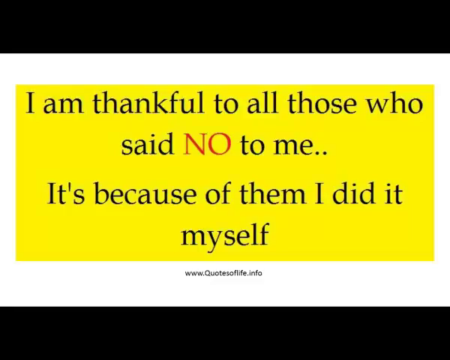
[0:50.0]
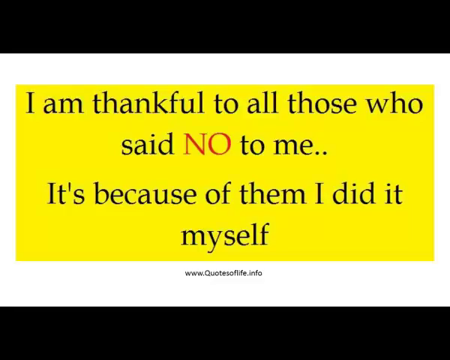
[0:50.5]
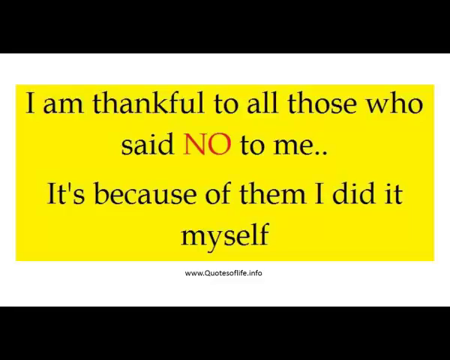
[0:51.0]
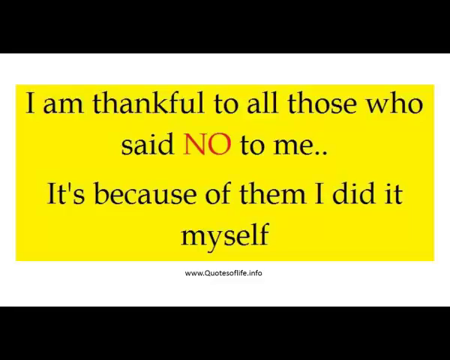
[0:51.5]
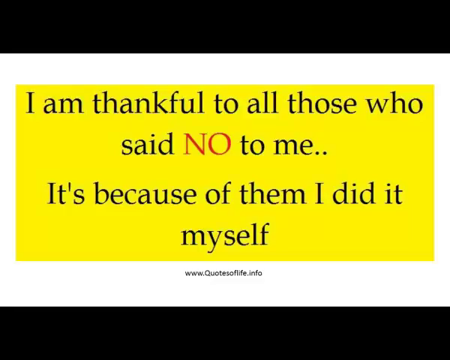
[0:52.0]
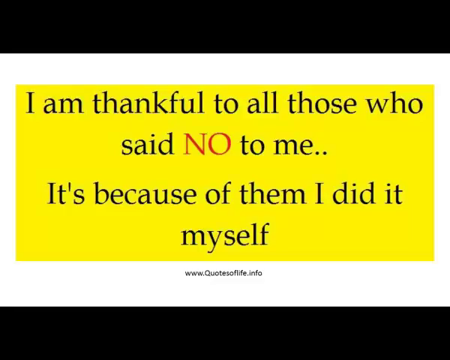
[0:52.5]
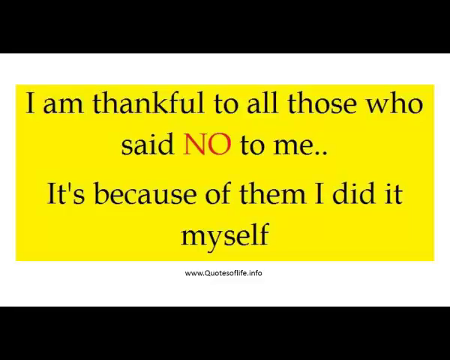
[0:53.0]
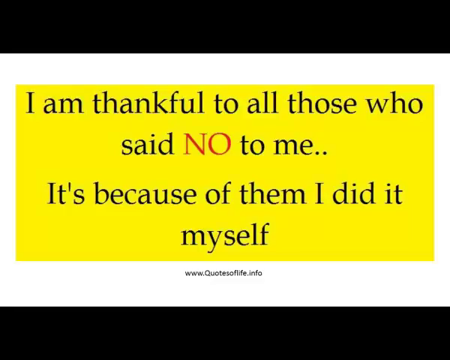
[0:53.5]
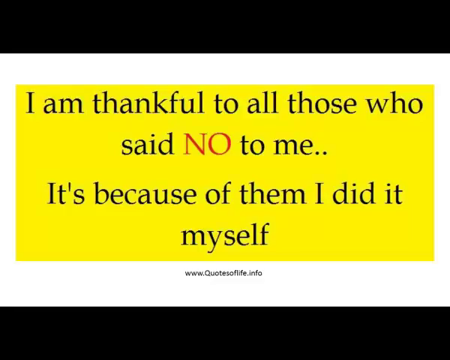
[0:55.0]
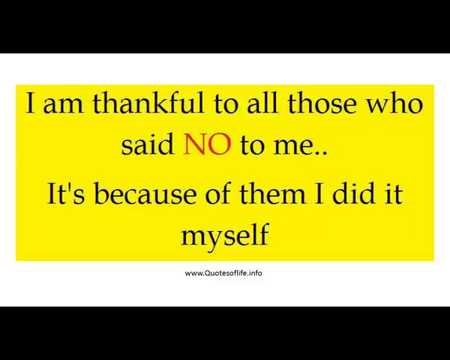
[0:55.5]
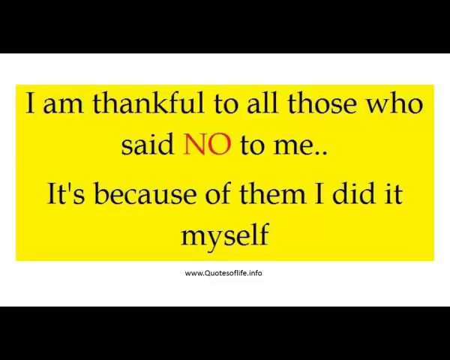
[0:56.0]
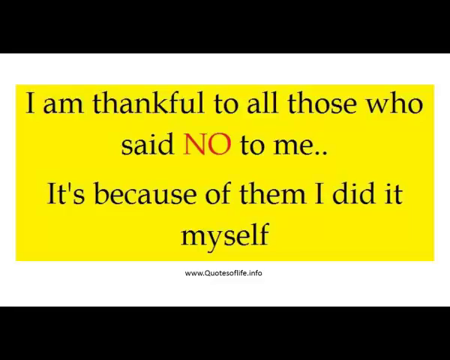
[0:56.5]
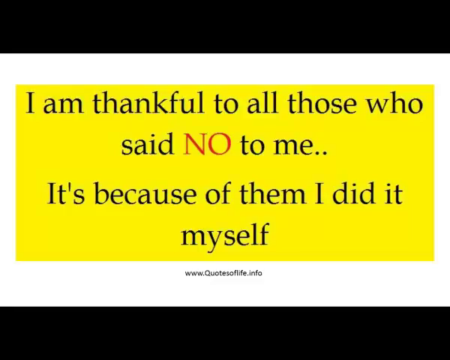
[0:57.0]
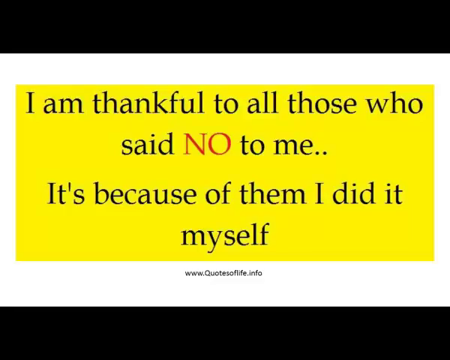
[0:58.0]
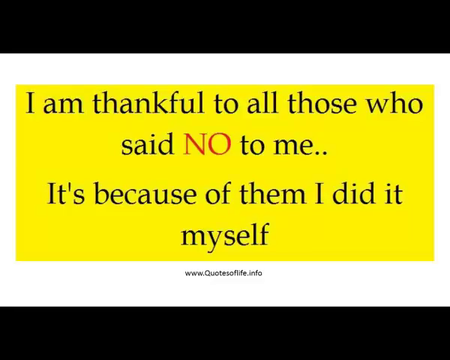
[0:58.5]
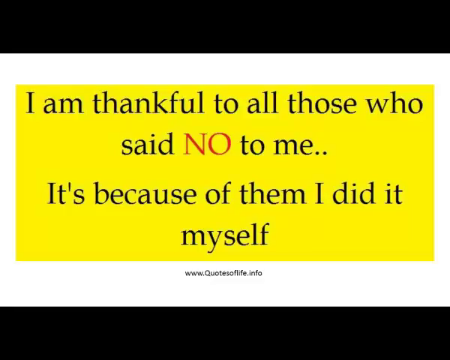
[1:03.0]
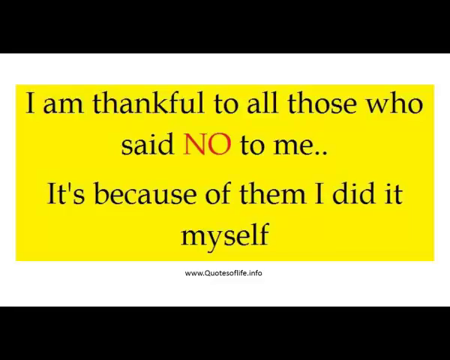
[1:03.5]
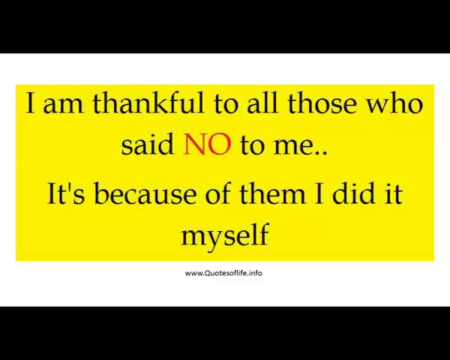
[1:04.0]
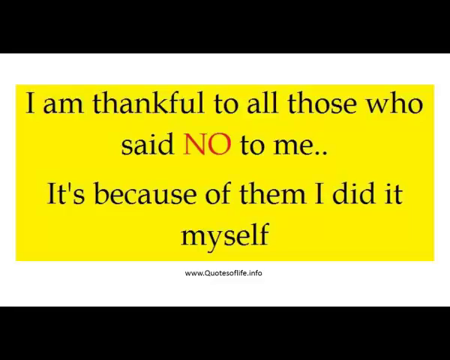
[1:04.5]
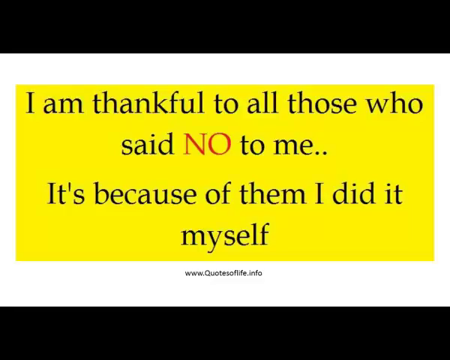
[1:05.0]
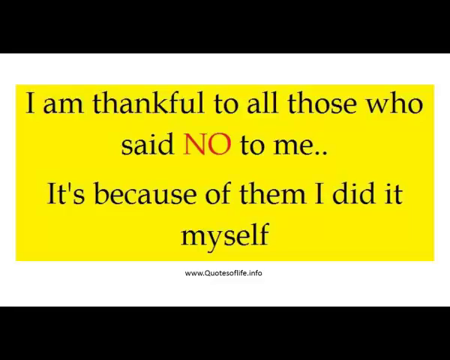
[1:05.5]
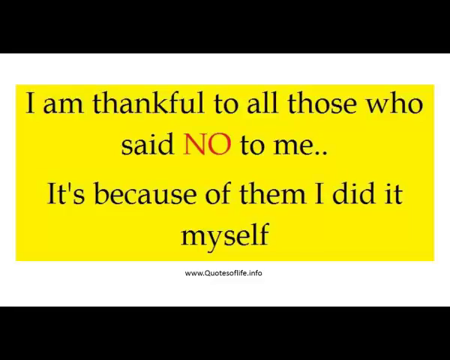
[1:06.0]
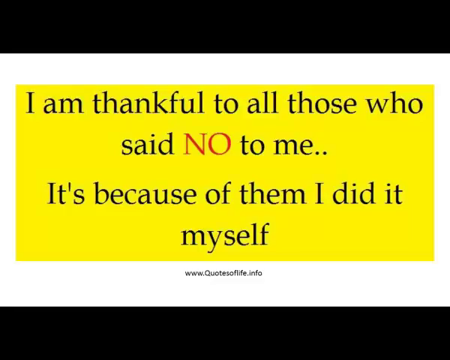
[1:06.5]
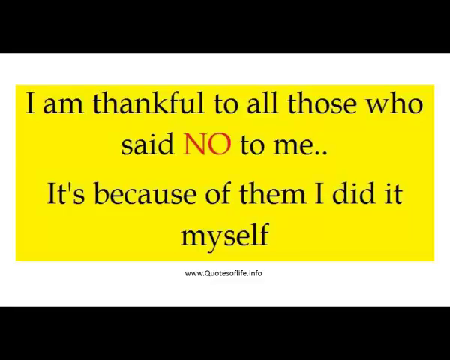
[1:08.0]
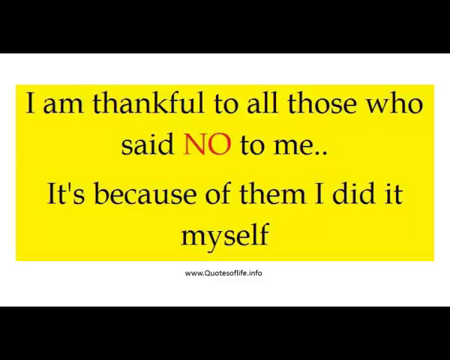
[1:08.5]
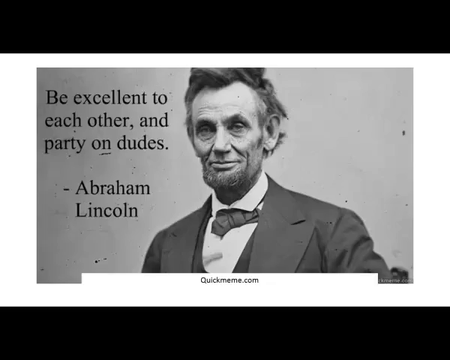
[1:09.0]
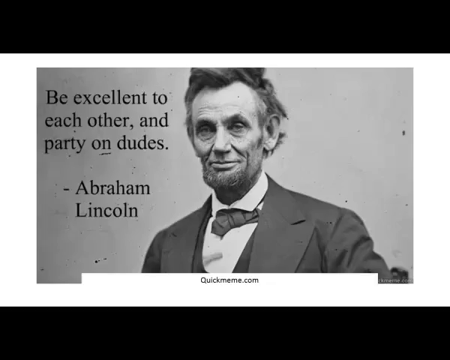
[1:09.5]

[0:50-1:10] Each slide has a black frame with a white background inside it. The quote slide reads "I am thankful to all those who said no to me.. It's because of them I did it myself." The word "no" is capitalized and in red letters, while the rest is in black, and two dots like an ellipsis follow "said no to me." Underneath is "www.quotesoflife.info." The next slide shows an old black-and-white picture of Abraham Lincoln wearing a suit with a kind of messed-up tie and a slight smile on his face. A quote on it reads "be excellent to each other, and party on, dudes," followed beneath by a dash and the name "Abraham Lincoln." At the bottom is another link reading "quickmeme.com."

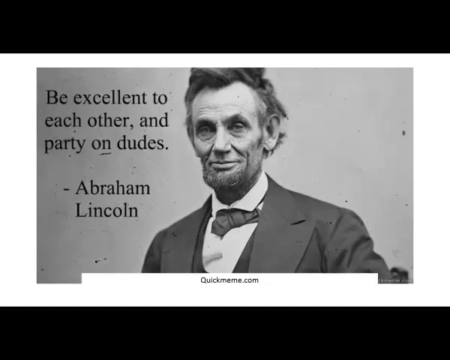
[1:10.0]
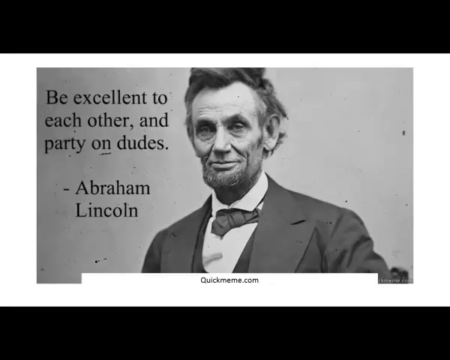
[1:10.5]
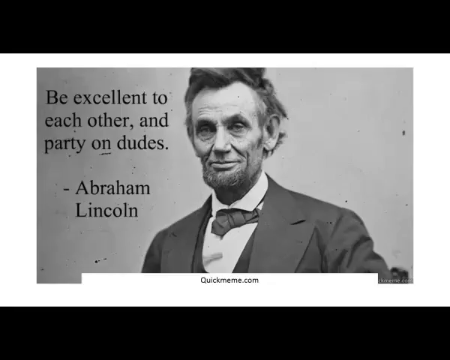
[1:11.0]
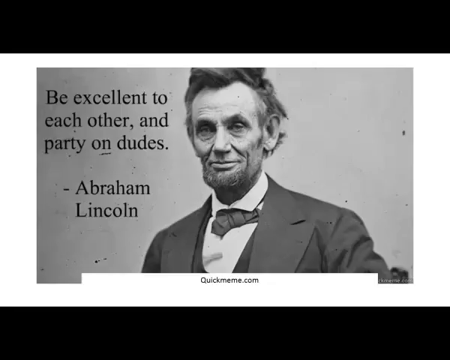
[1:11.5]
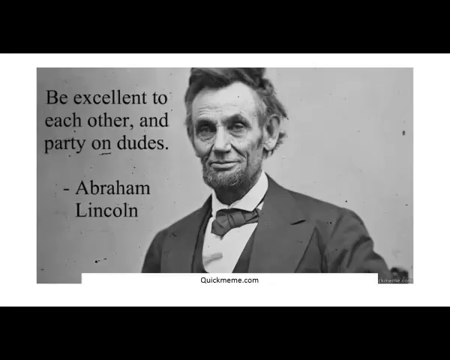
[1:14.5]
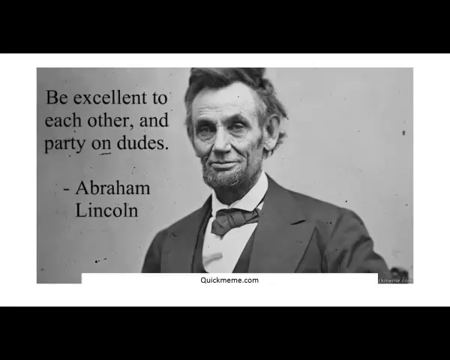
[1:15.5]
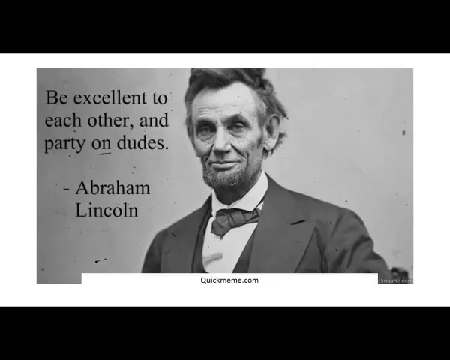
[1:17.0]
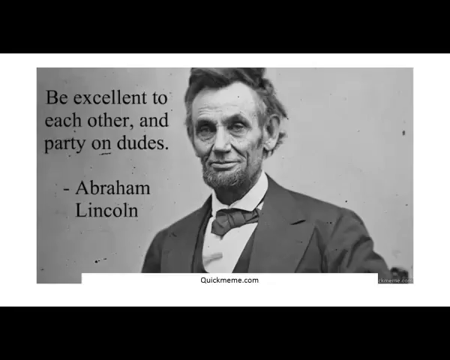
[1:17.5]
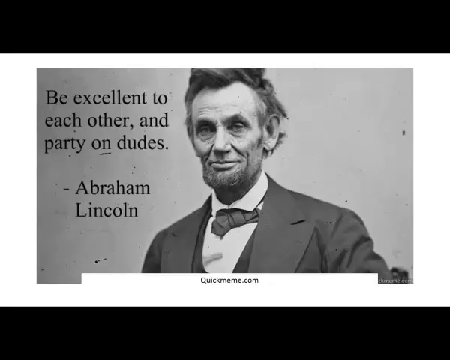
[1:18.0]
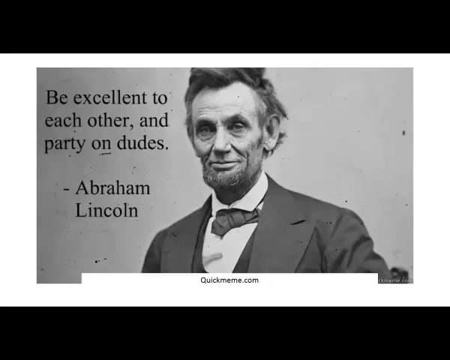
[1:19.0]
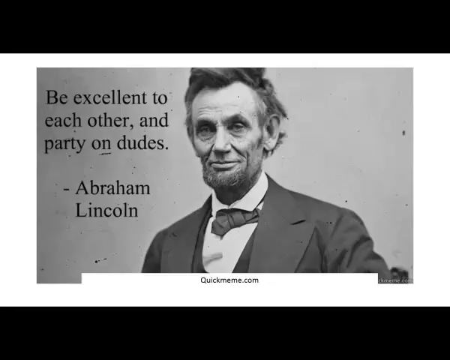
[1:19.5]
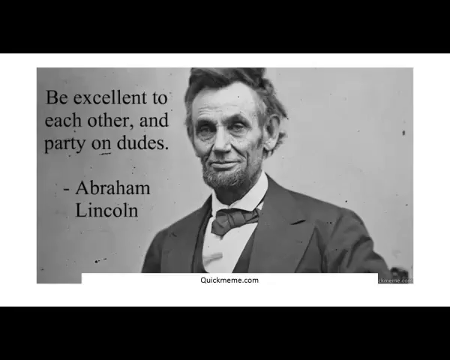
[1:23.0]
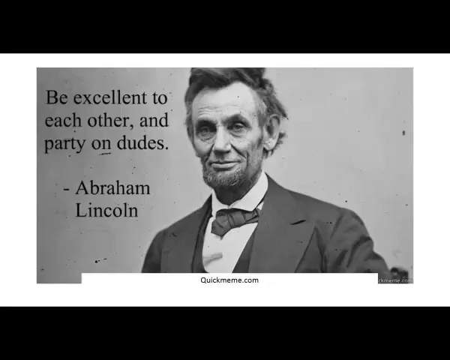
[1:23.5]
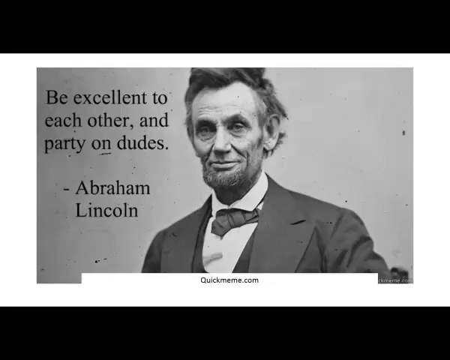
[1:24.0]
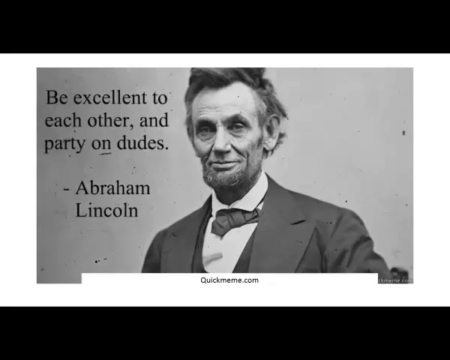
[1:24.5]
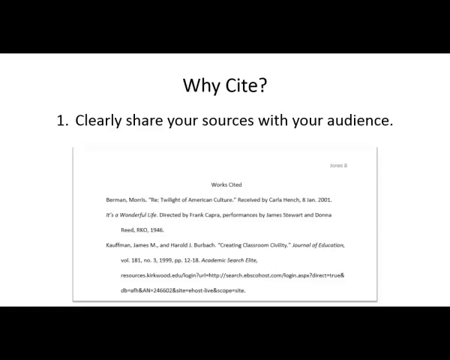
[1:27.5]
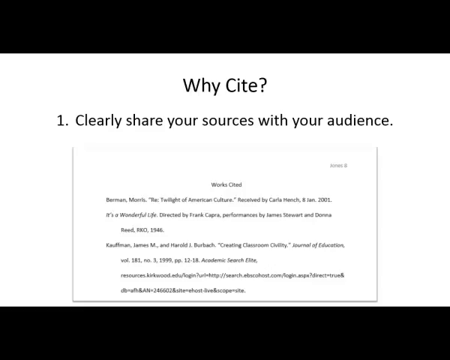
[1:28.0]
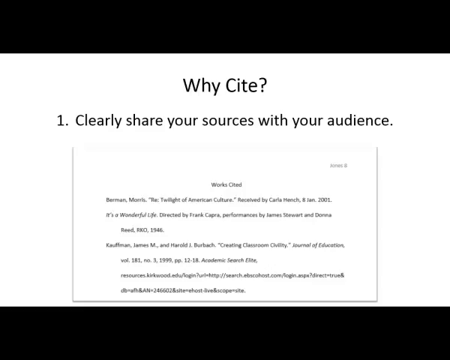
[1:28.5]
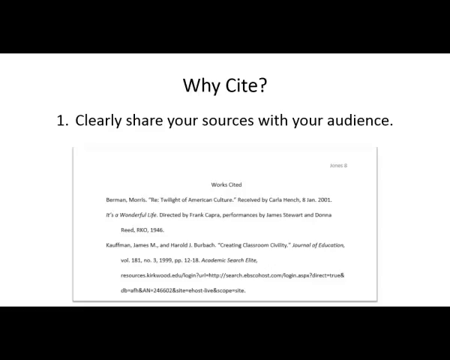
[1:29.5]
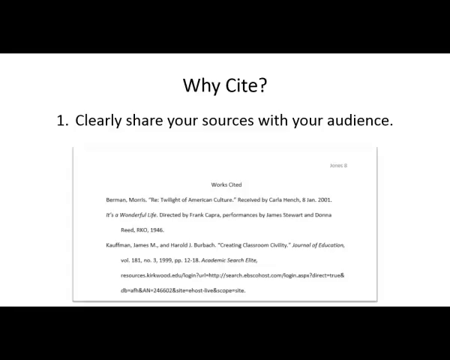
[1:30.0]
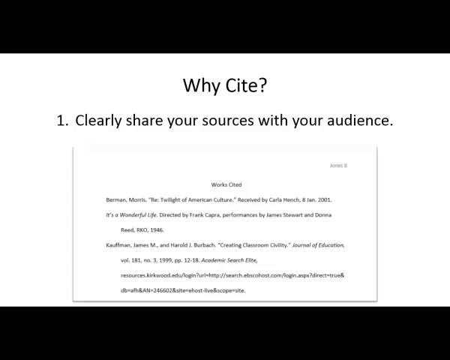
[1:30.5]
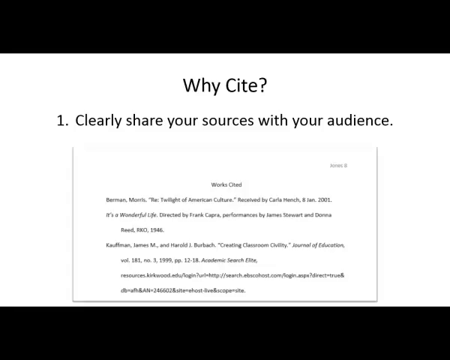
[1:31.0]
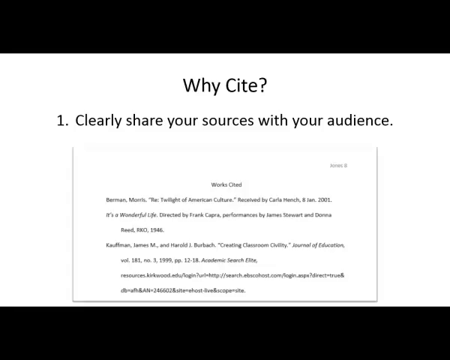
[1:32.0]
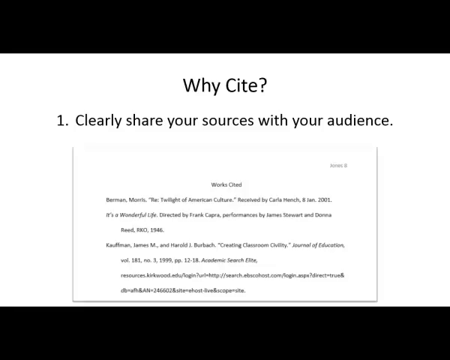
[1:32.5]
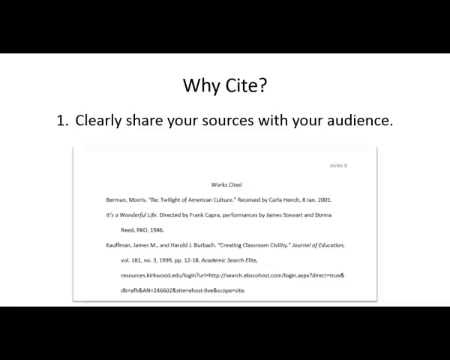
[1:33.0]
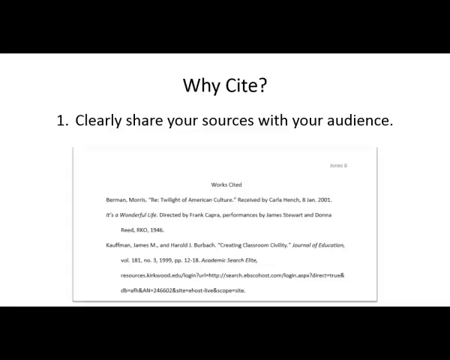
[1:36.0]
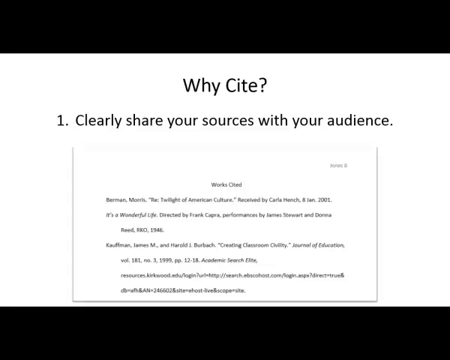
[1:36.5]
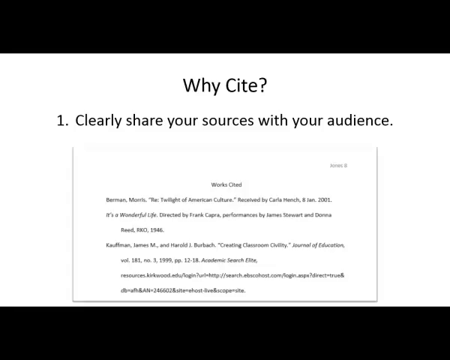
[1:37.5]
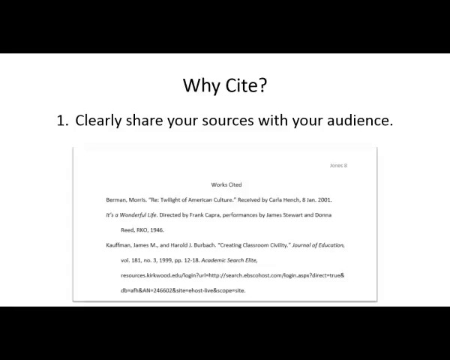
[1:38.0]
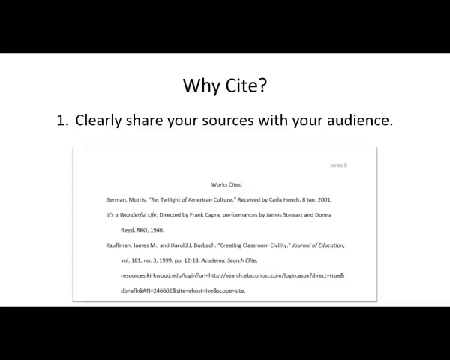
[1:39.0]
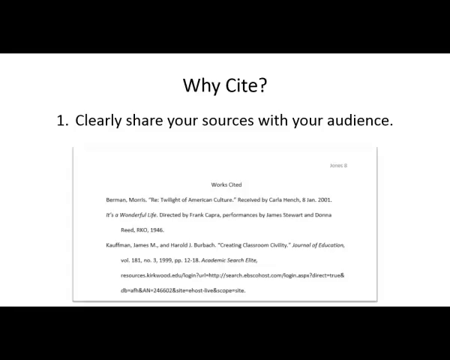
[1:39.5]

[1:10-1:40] The black-and-white picture of Abraham Lincoln with the quote "be excellent to each other and party on, dudes" and, underneath, a small dash and "Abraham Lincoln" continues. Then a slide reads "why cite?" and "one, clearly share your sources with your audience." It includes a very blurry, hard-to-read picture of a screen of text headed "works cited." The blurry text appears to include entries such as "Berman Morris," "Twilight of American Culture," "received by Carla Hinch, 8th Jan, 2000," "It's a Wonderful Life, directed by Frank Capra. Performances by James Stewart and Donna Reed," "Creating Classroom Civility," "Journal of Education," "Academic Search Elite," and a URL containing "kirkwood.edu/login" and "search" that cannot be fully read.